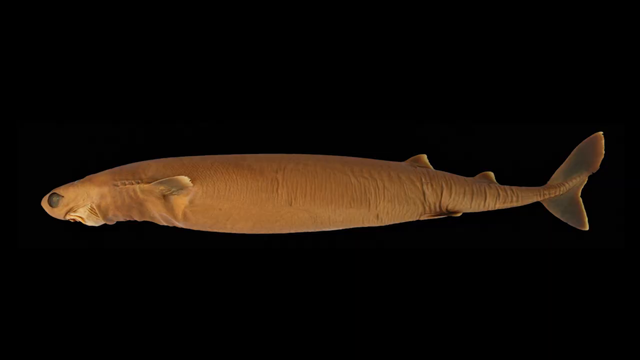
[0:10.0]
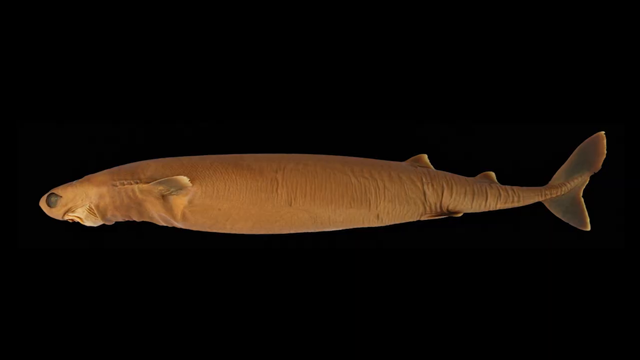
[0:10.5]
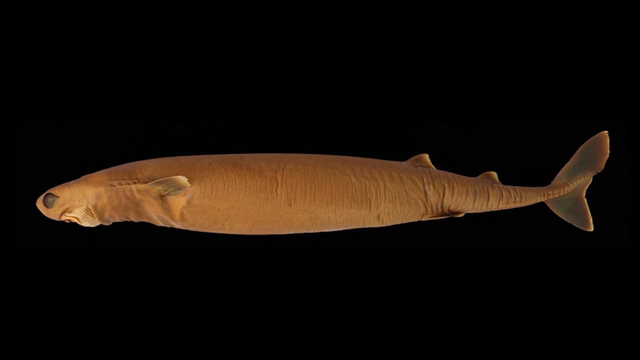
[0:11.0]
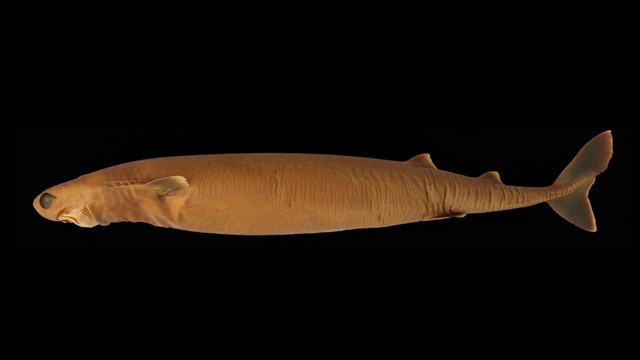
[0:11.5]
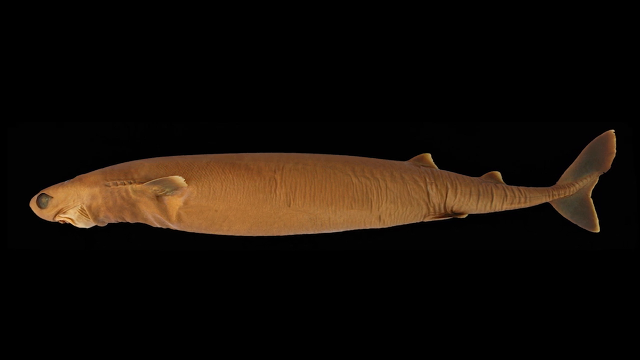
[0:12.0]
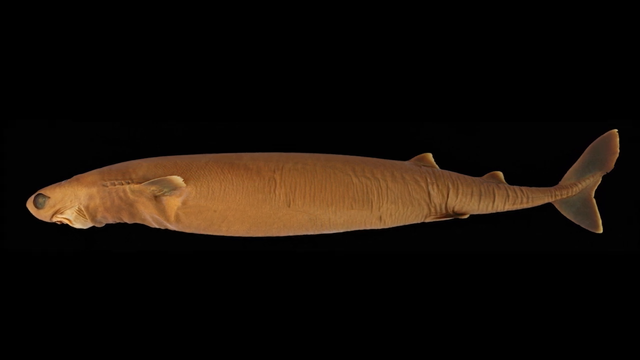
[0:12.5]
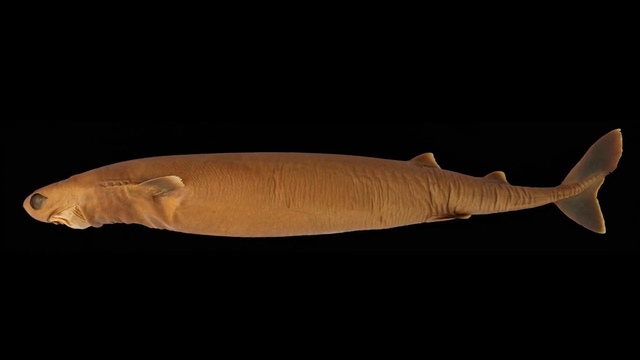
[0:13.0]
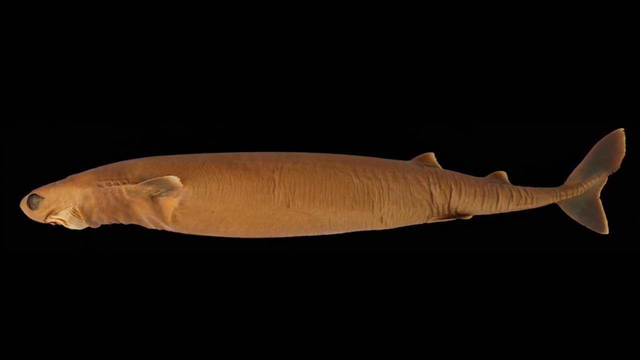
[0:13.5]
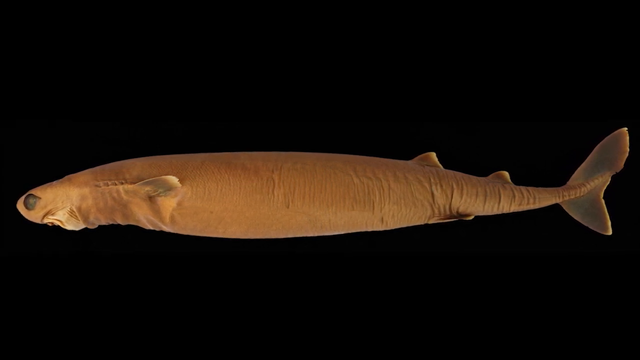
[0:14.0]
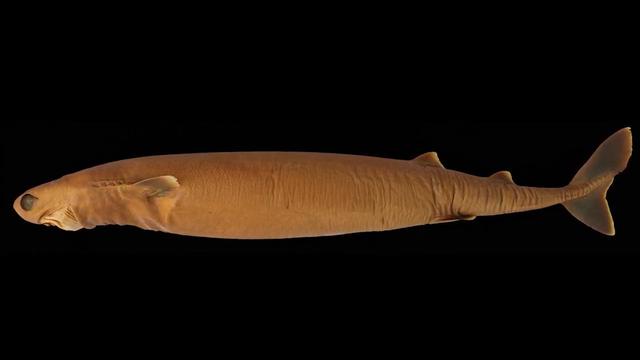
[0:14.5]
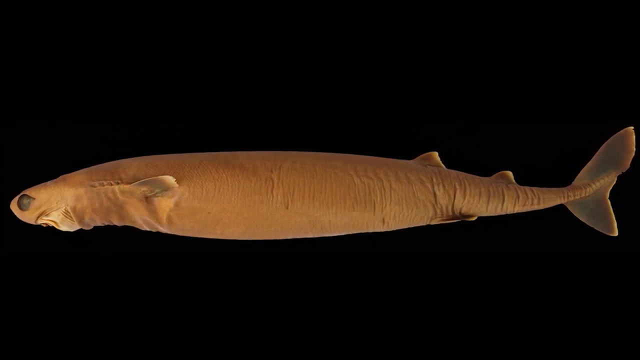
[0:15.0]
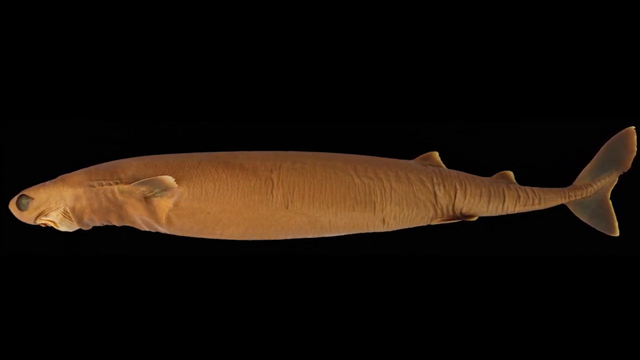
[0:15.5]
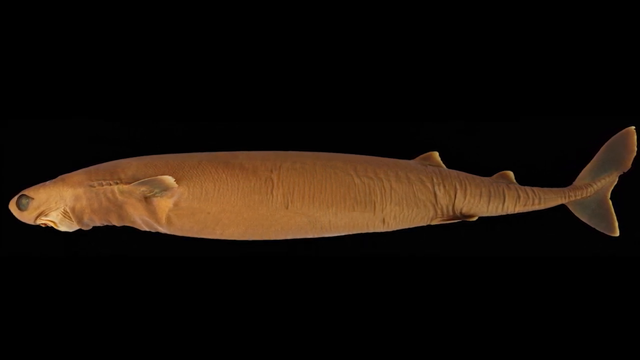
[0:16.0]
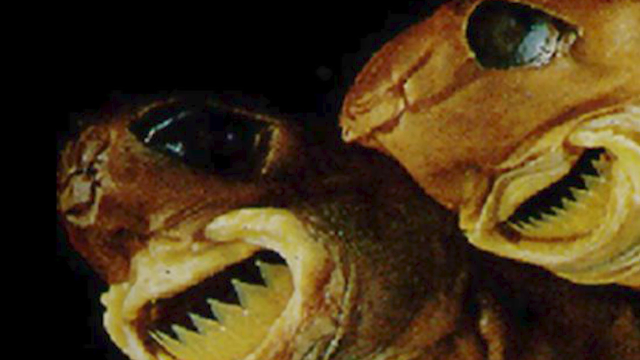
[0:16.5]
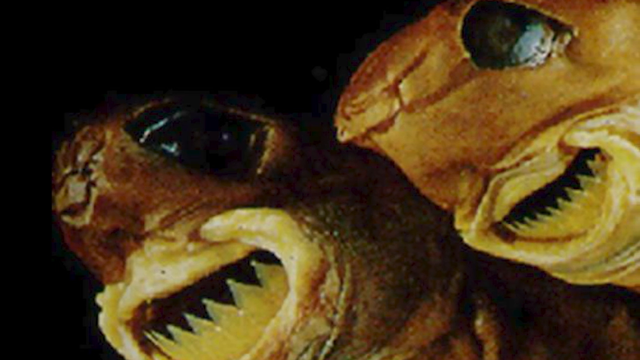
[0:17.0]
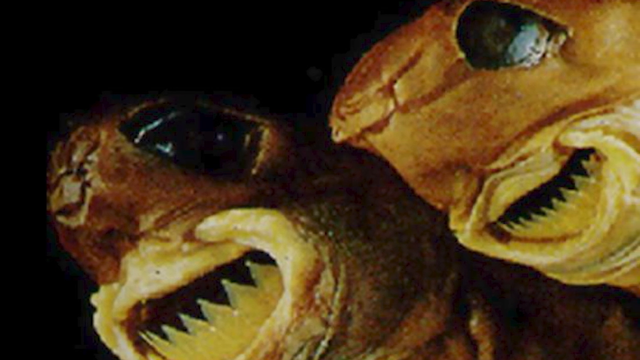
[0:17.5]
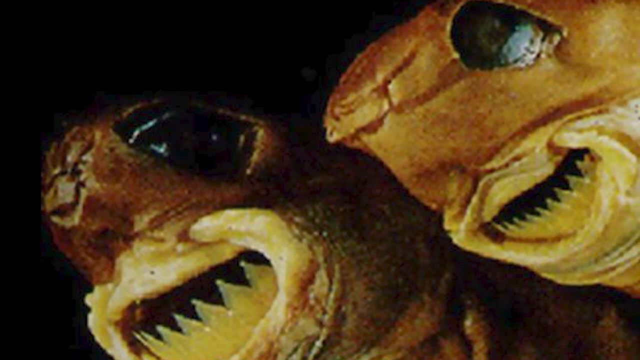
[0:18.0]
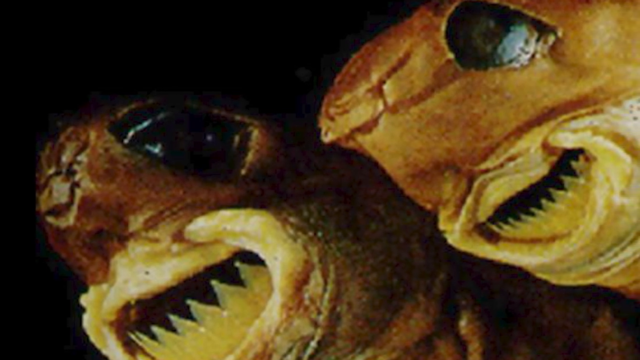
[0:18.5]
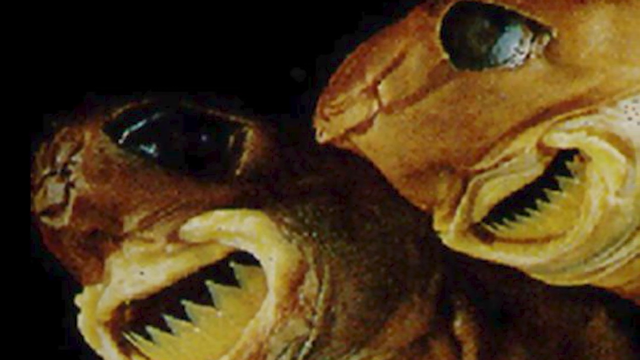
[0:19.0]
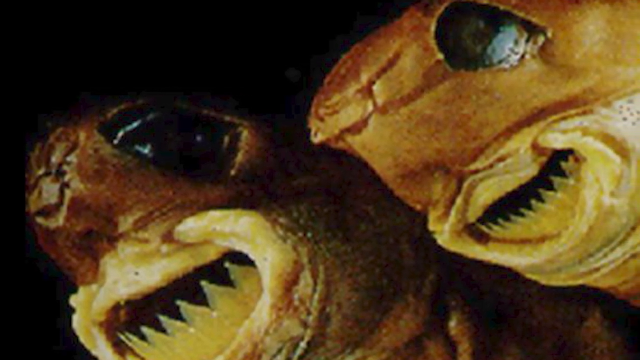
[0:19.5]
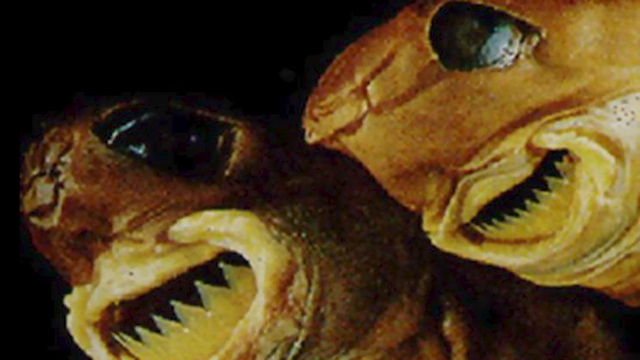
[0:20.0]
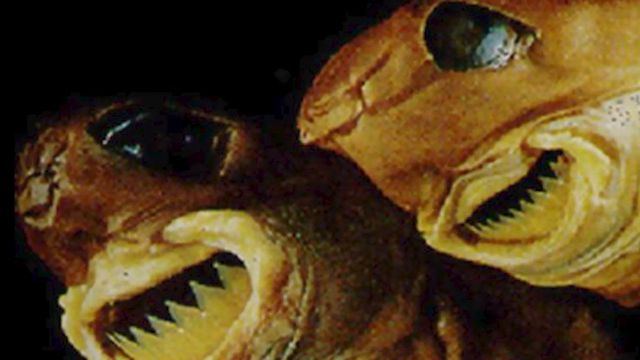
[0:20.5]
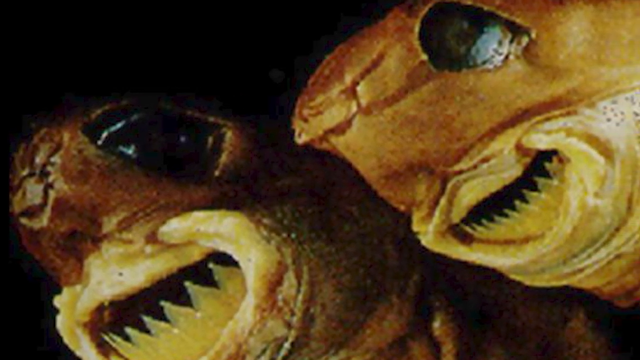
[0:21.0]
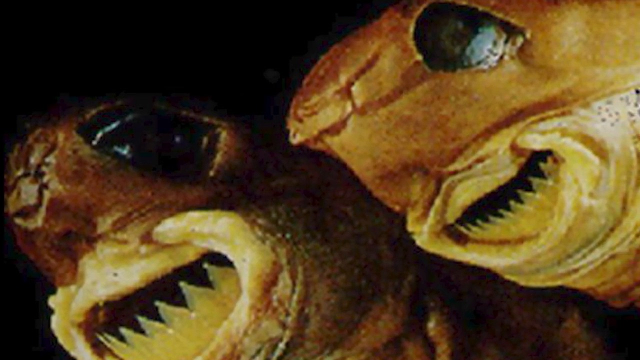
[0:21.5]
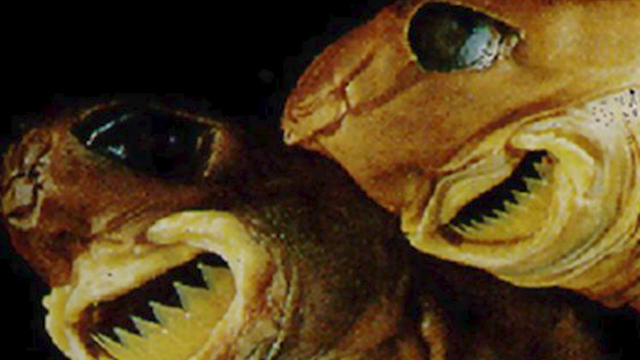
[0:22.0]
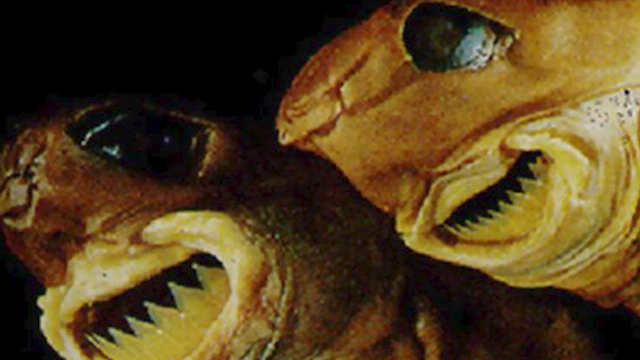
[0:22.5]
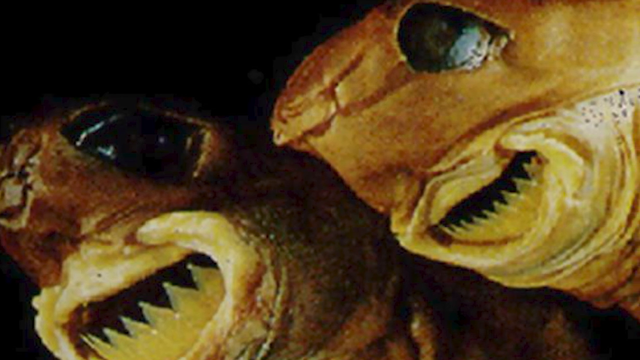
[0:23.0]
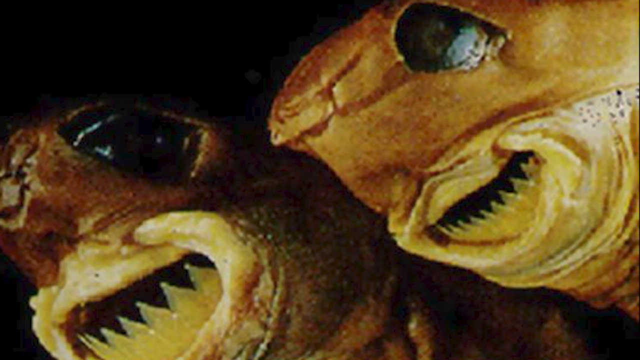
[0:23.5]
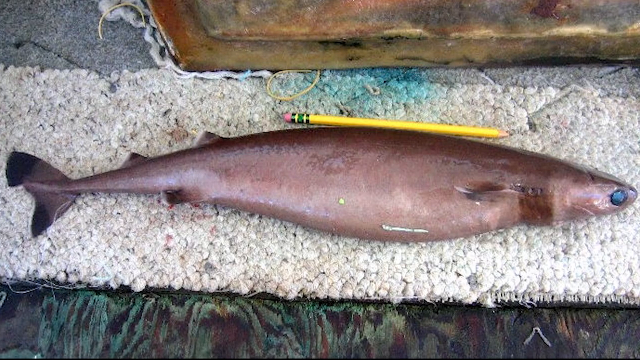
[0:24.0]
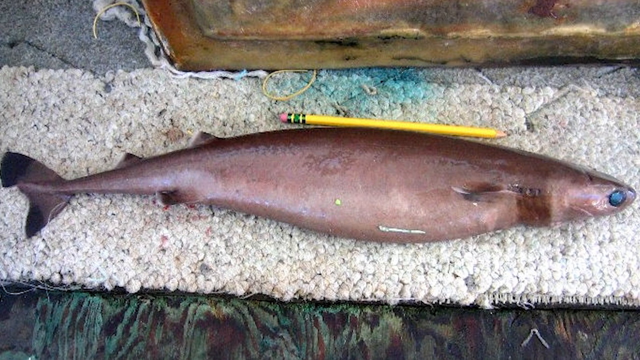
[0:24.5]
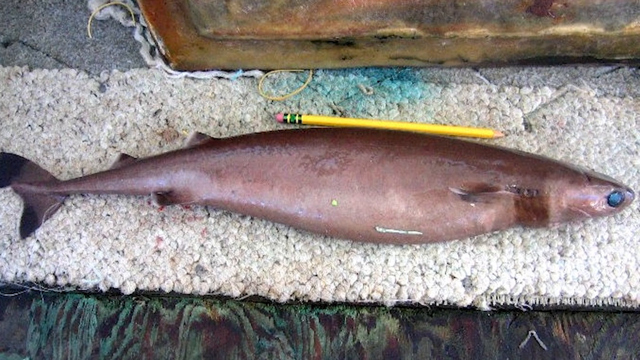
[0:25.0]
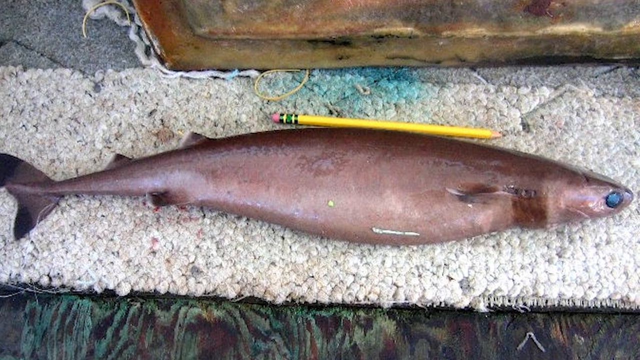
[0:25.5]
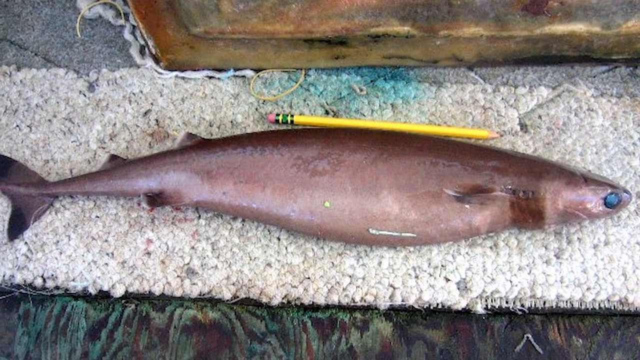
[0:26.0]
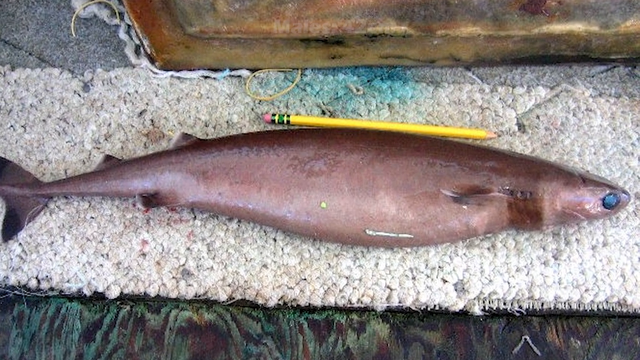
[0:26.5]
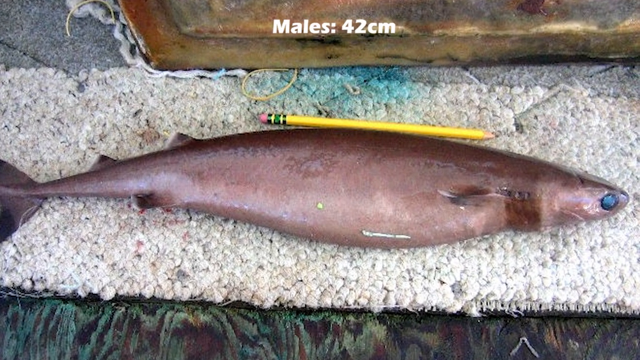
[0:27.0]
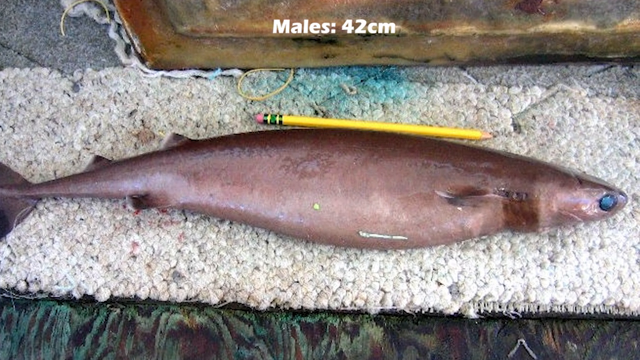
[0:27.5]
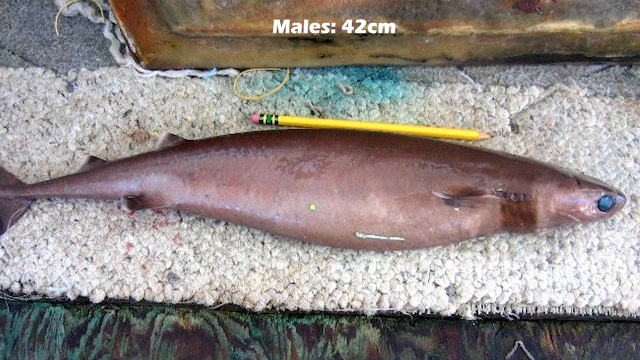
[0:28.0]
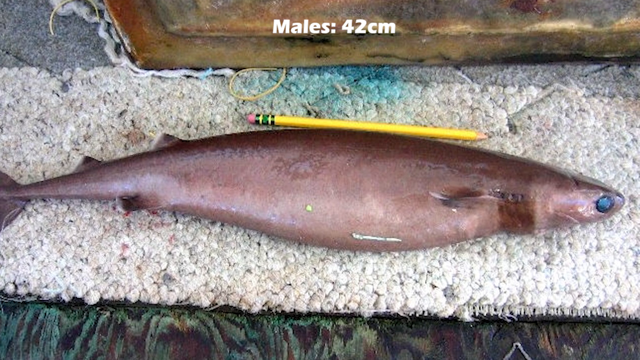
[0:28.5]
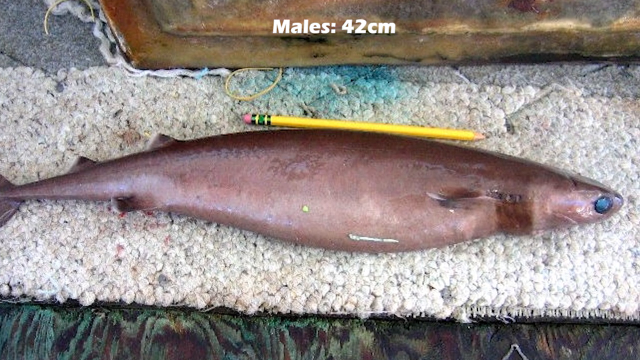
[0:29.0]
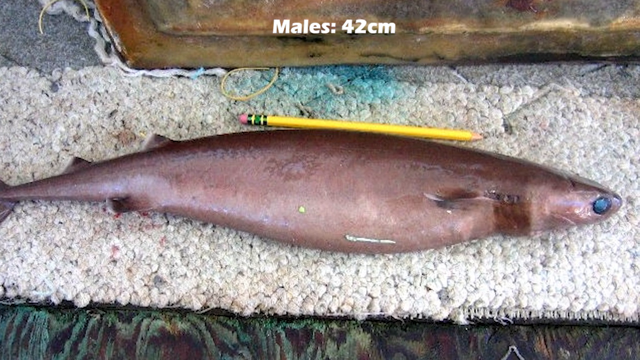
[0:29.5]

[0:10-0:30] The face and body of the fish are shown. It looks like it has very smooth skin, and its fins appear very small. The video focuses in on the fish's face, where the eyes, mouth and other features look squished or morphed together, making it look fairly abnormal or strange.